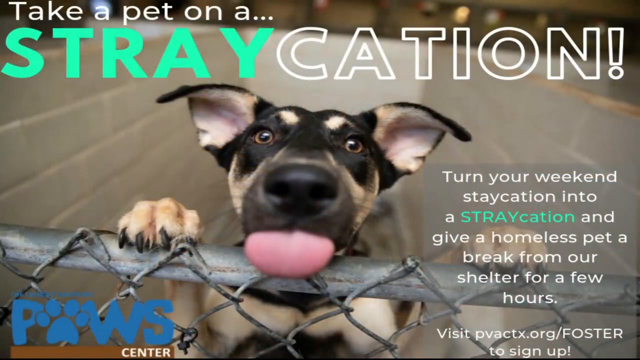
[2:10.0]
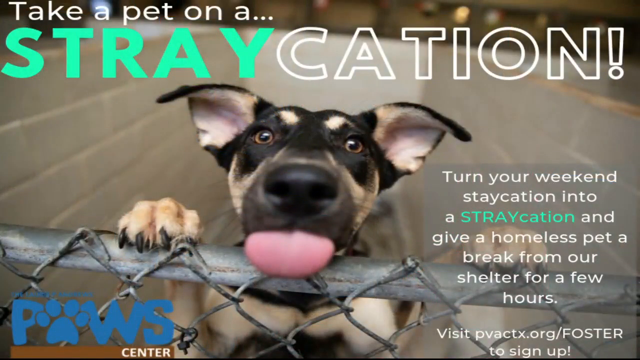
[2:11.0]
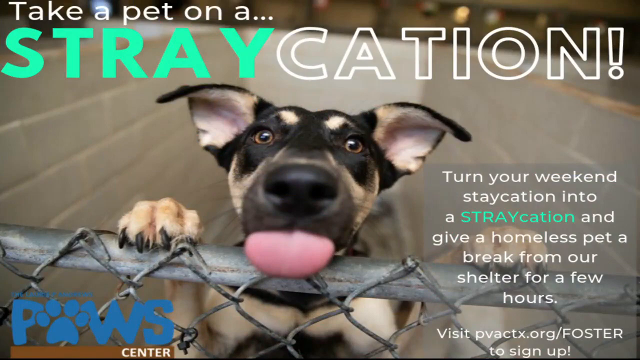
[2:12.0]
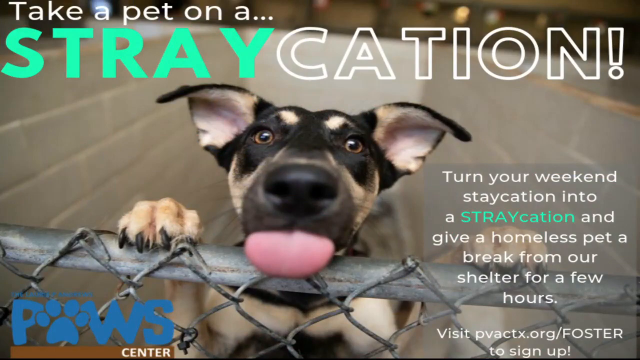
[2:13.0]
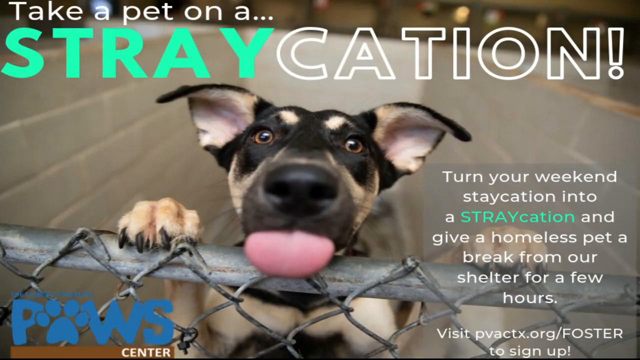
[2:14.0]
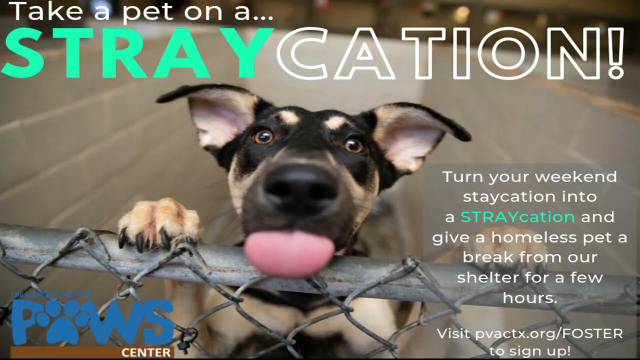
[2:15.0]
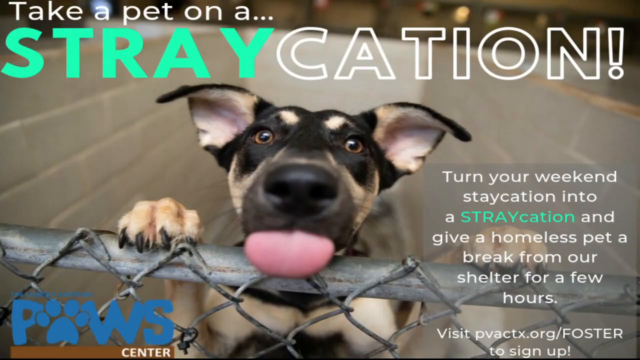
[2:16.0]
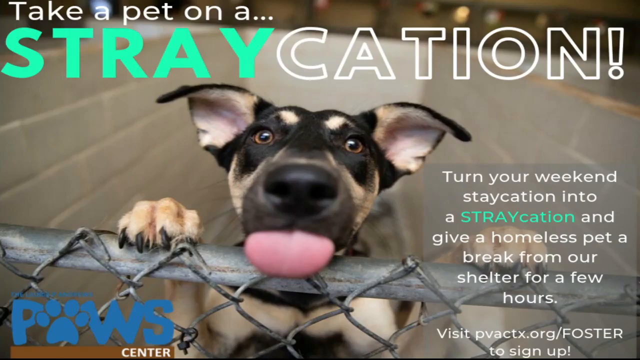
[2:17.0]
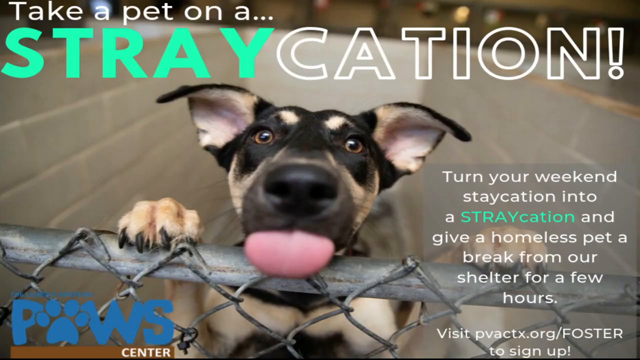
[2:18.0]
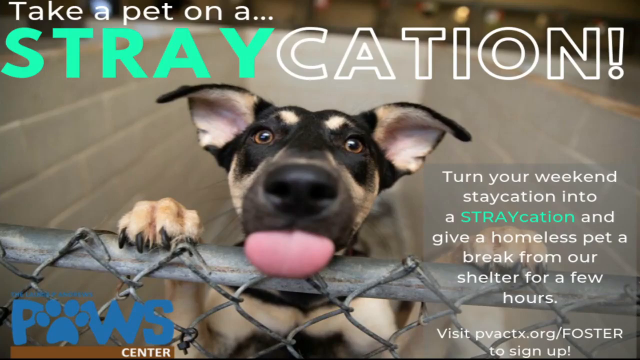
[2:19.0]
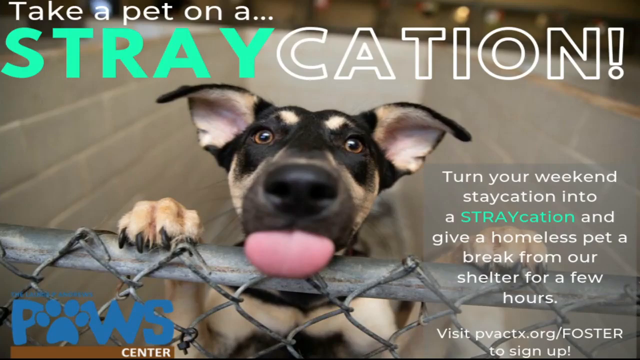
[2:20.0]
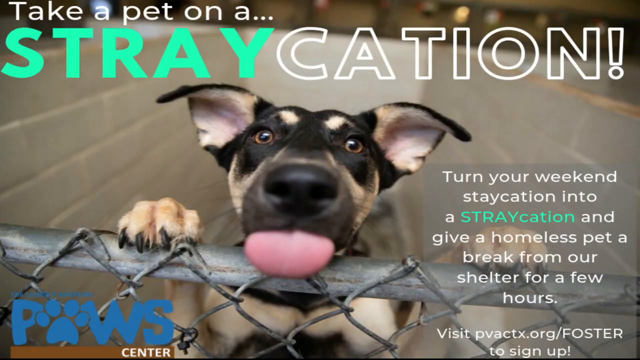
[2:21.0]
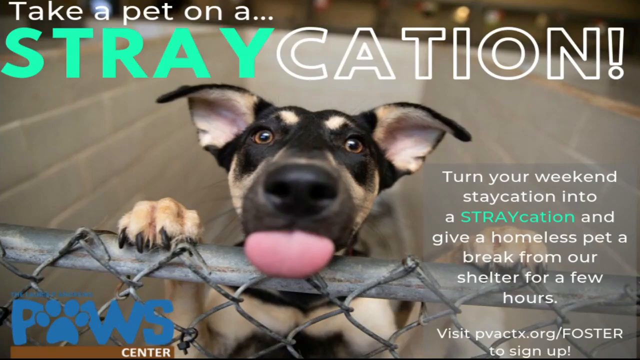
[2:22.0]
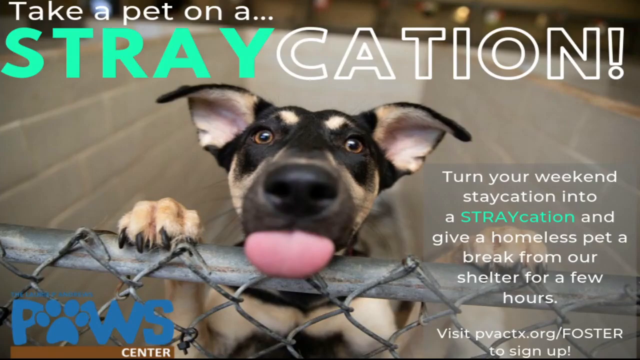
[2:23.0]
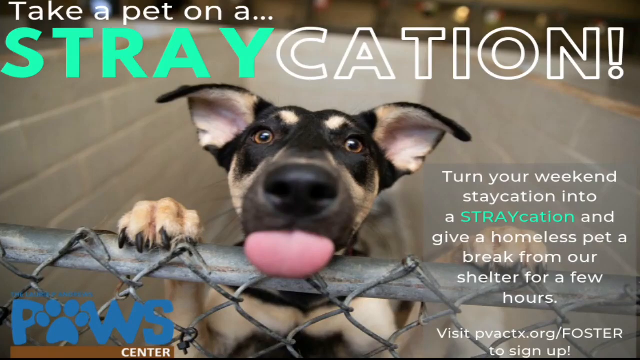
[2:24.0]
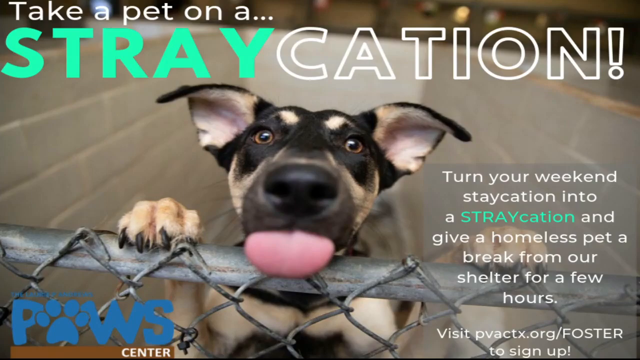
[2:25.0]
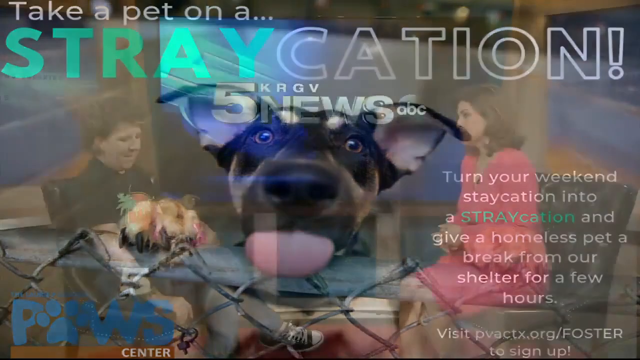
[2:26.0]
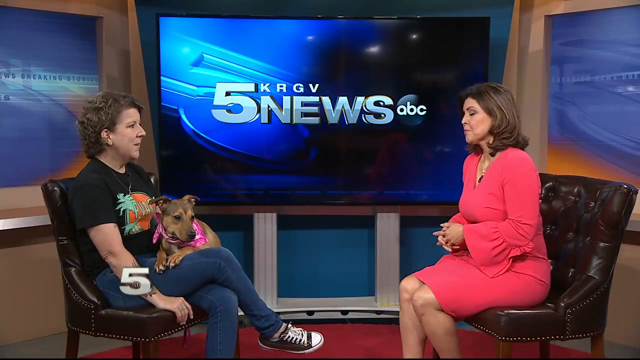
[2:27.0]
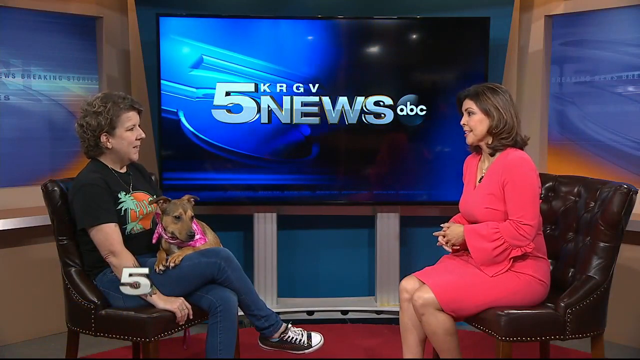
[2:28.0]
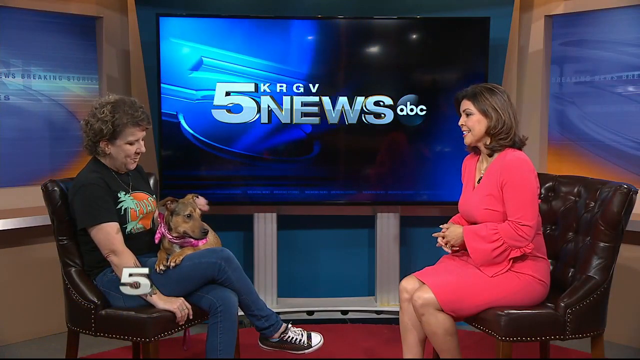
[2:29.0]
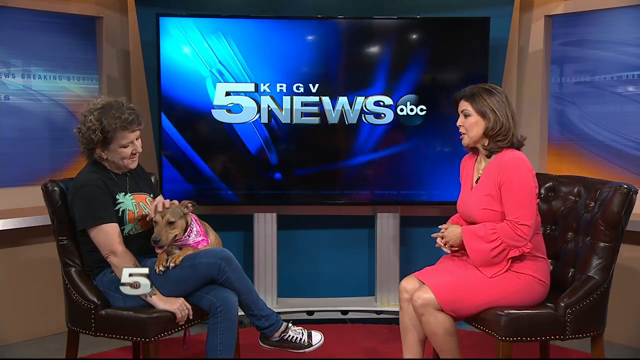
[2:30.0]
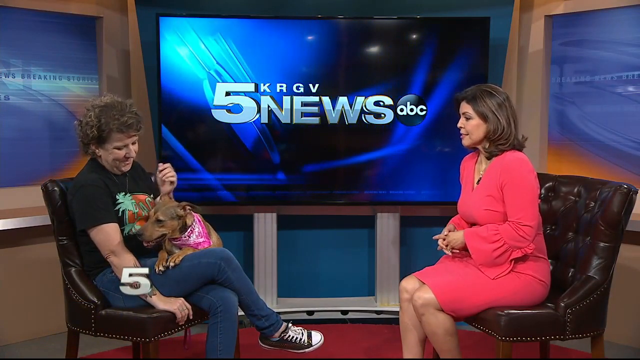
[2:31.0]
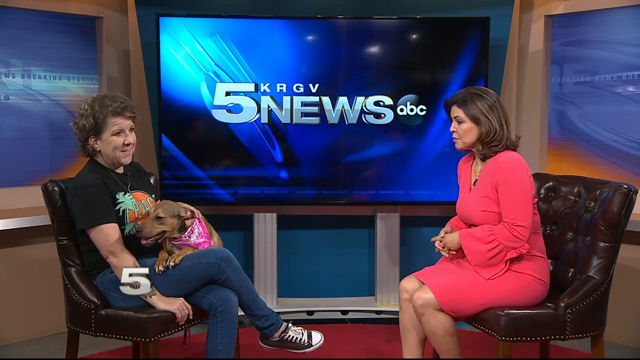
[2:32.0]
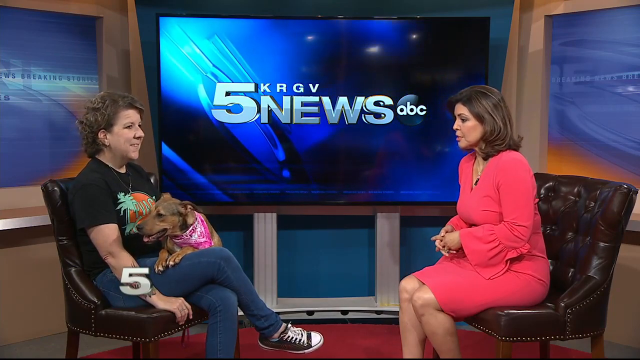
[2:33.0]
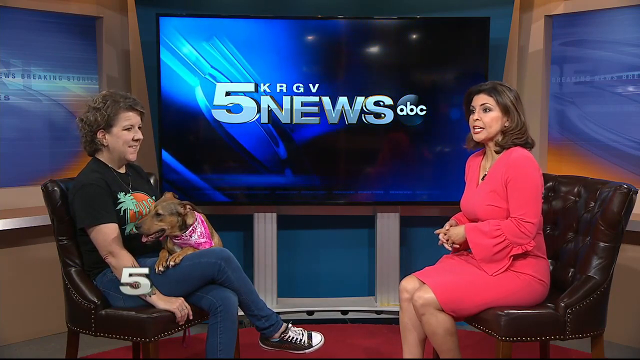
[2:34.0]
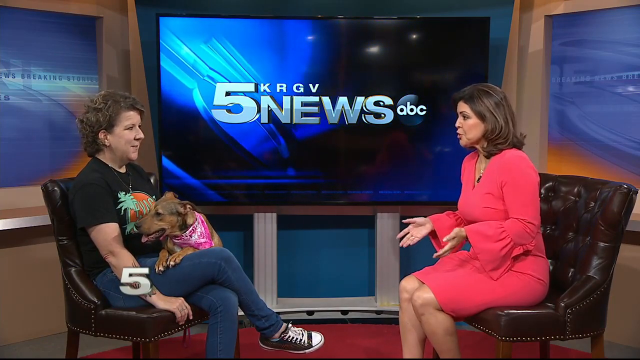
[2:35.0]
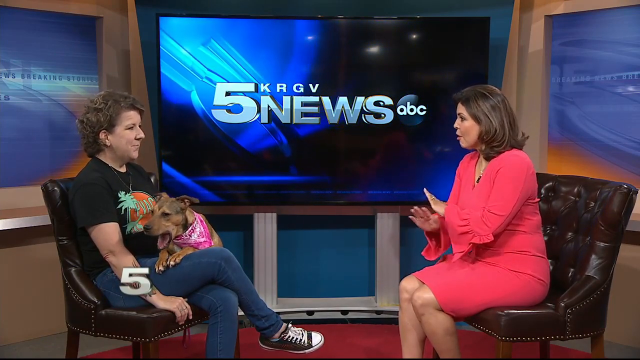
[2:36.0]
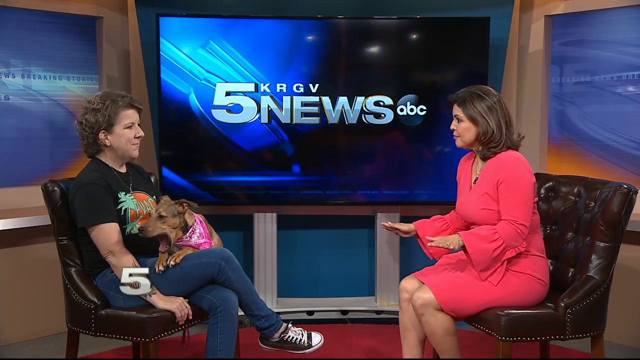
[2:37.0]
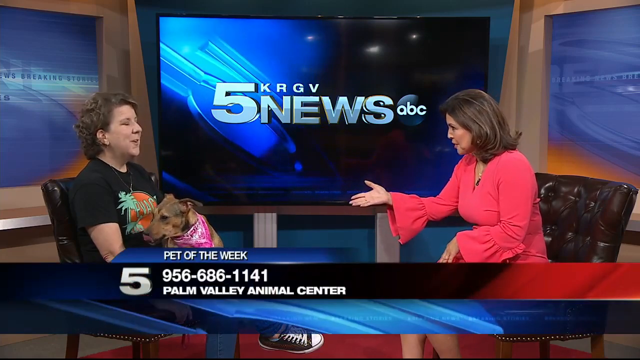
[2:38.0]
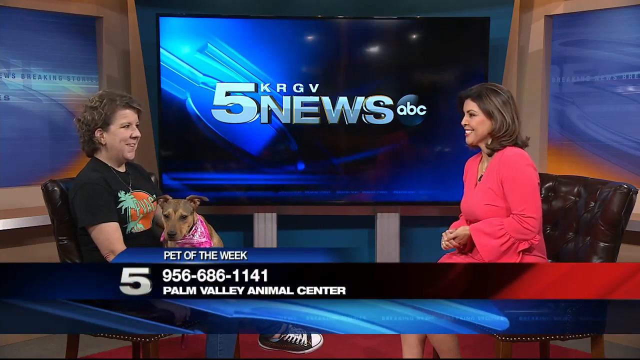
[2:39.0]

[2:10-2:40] The staycation ad continues, showing the dog with its tongue out, looking straight at the camera, with two paws on top of a railing fence. The video then transitions back to the news anchor and the dog owner. The owner pets the dog's head with her left hand and strokes back toward its tail. The dog yawns and looks at the audience. A "Pet of the Week" banner appears in the middle of the screen, giving the number of the Palm Valley Animal Center. The anchor and the owner keep talking while the dog looks at the crowd; the anchor looks at the dog, which stays calm and relaxed. The setting is still the newscaster's interview room.